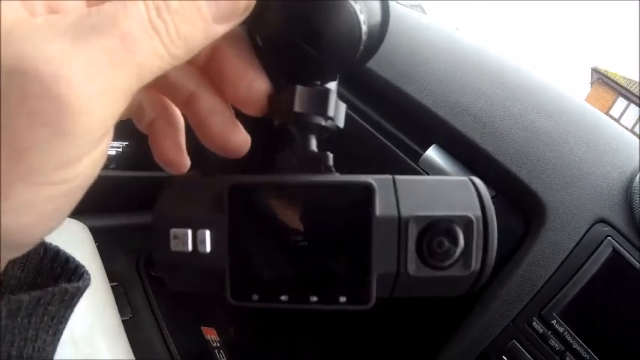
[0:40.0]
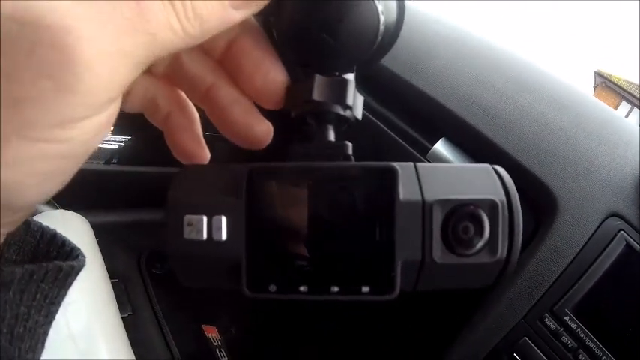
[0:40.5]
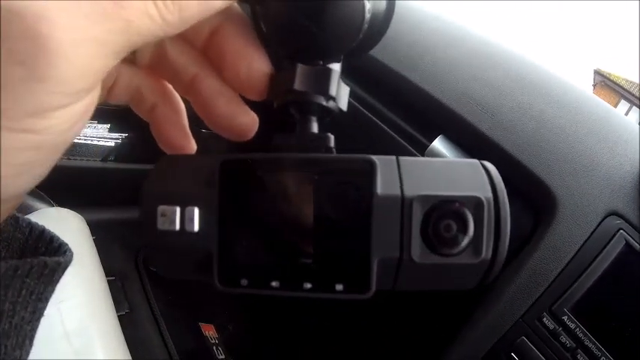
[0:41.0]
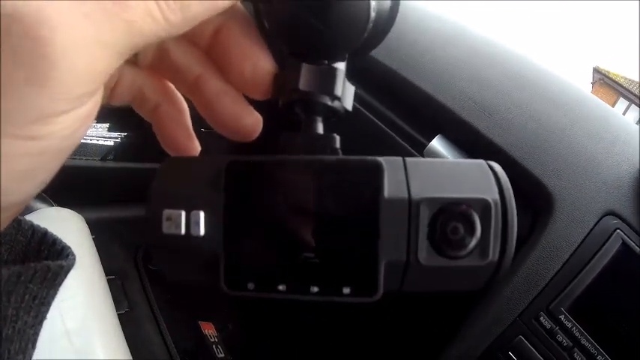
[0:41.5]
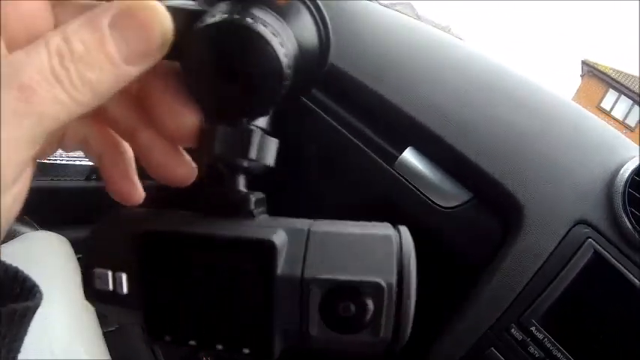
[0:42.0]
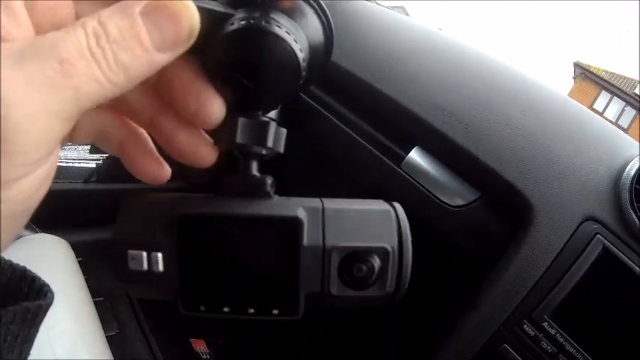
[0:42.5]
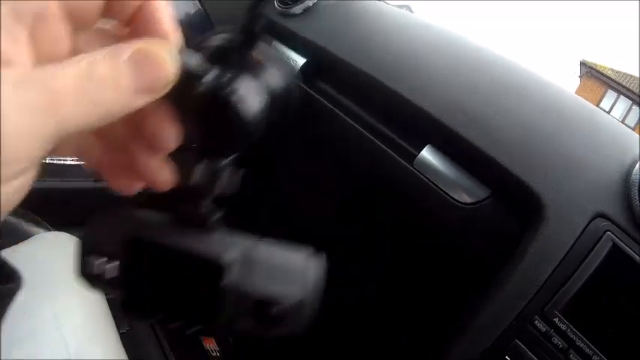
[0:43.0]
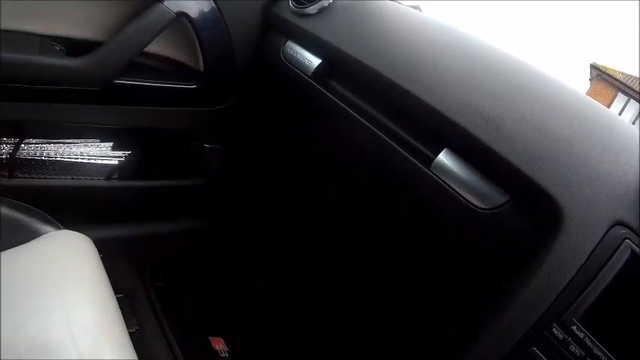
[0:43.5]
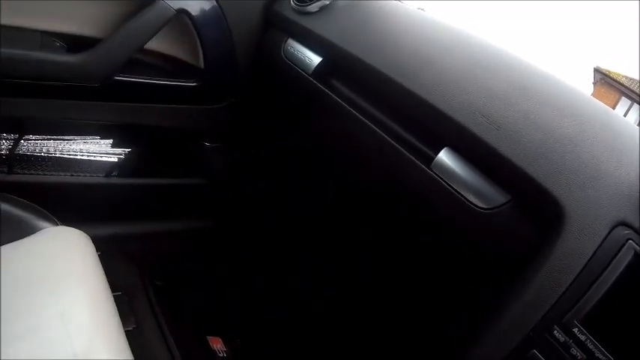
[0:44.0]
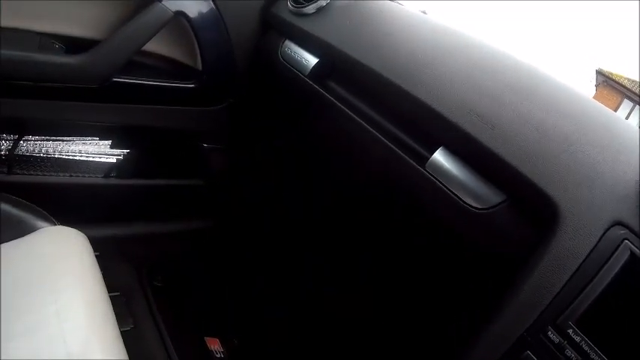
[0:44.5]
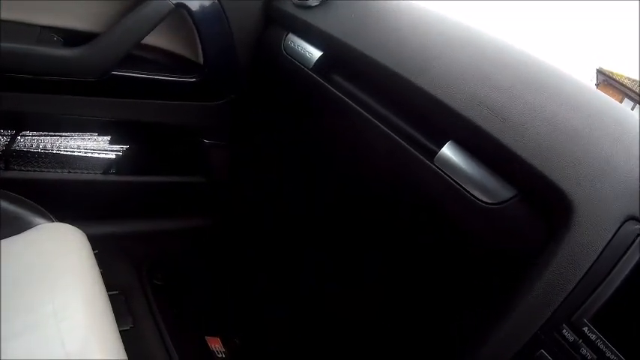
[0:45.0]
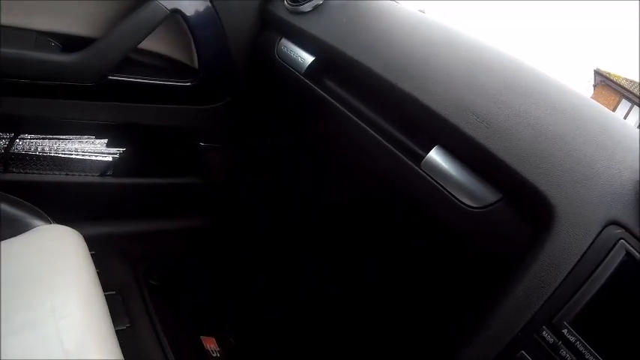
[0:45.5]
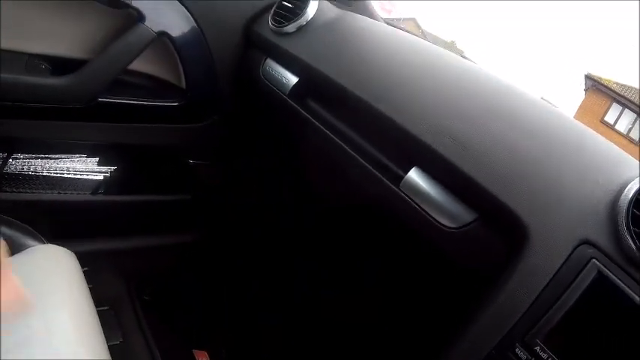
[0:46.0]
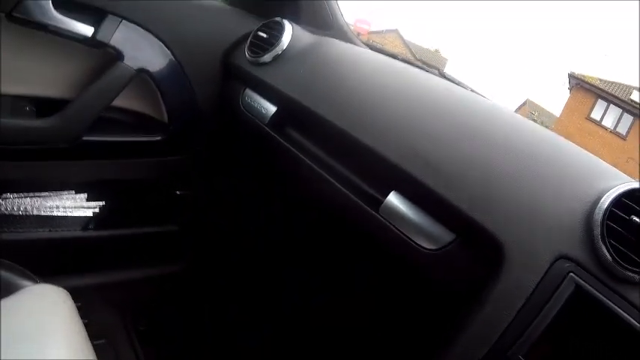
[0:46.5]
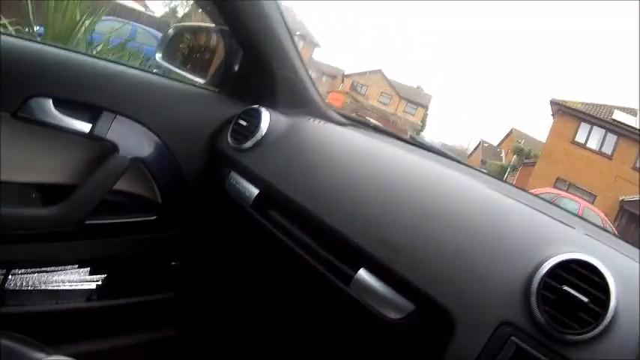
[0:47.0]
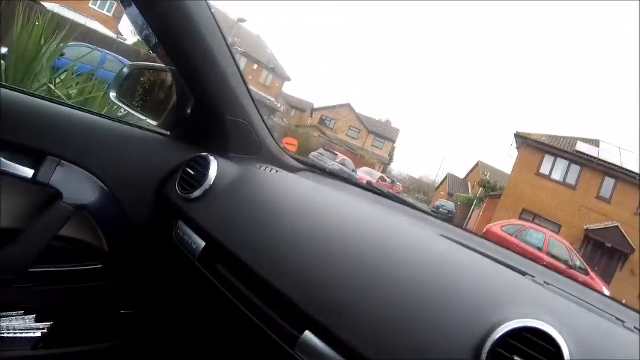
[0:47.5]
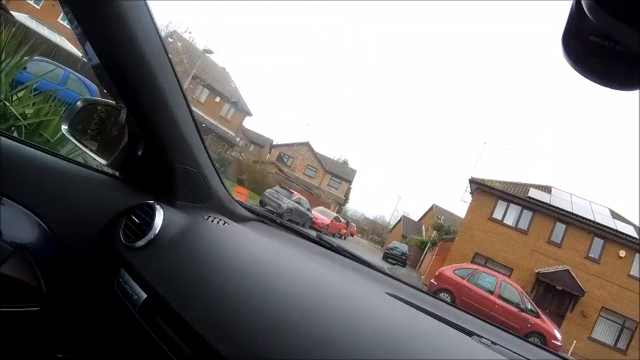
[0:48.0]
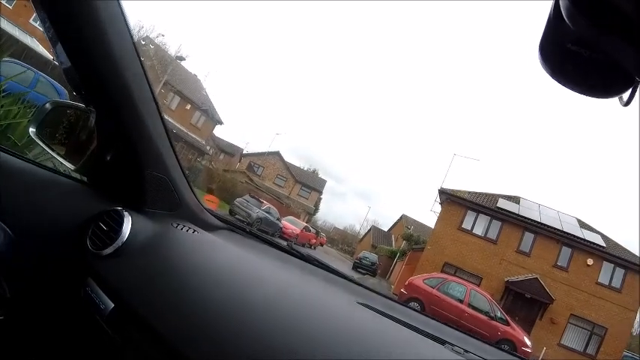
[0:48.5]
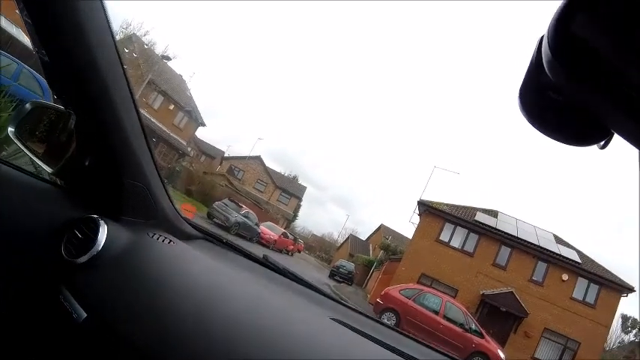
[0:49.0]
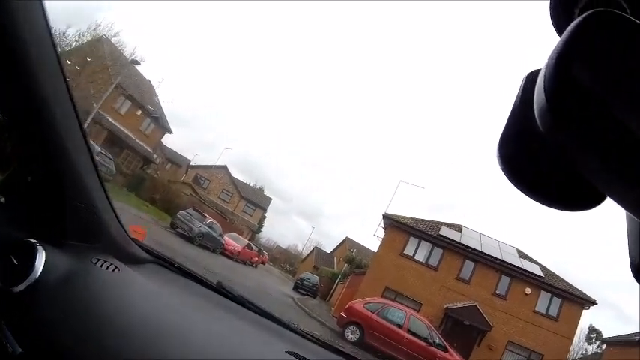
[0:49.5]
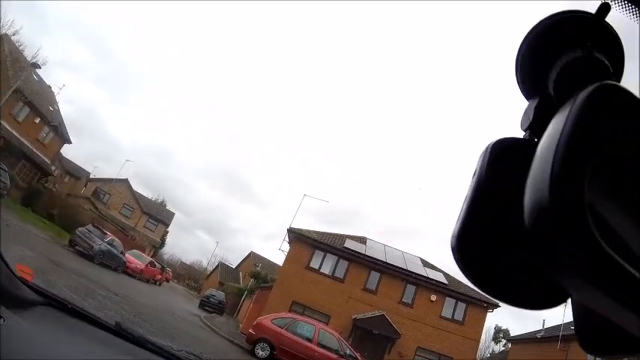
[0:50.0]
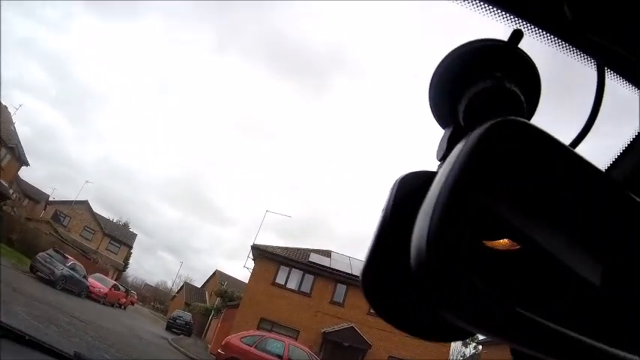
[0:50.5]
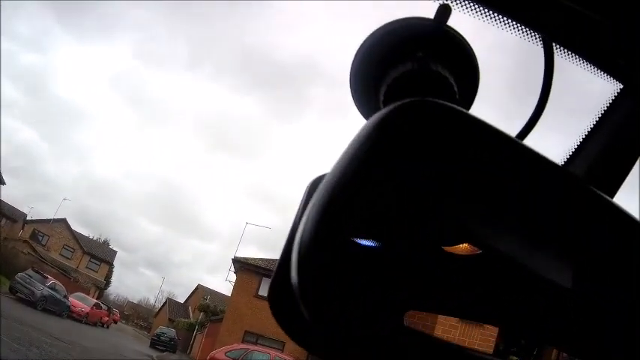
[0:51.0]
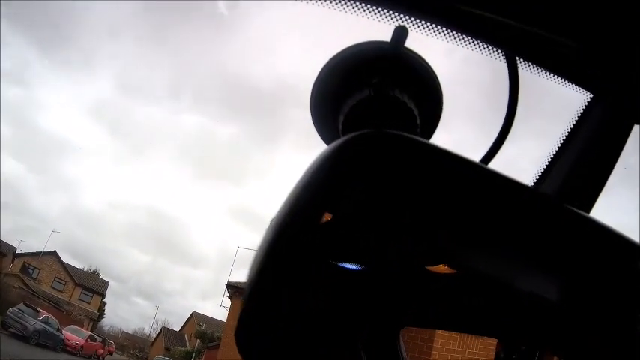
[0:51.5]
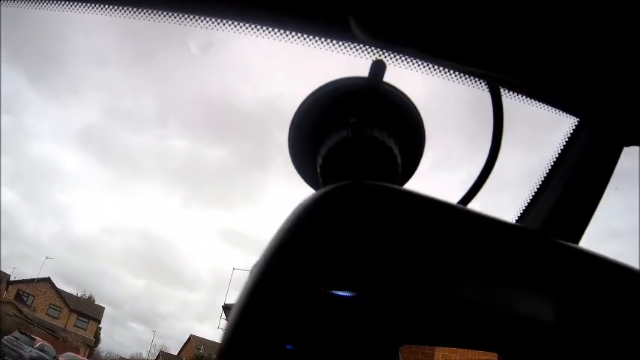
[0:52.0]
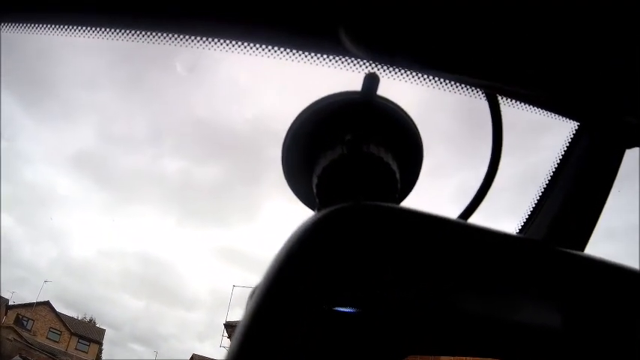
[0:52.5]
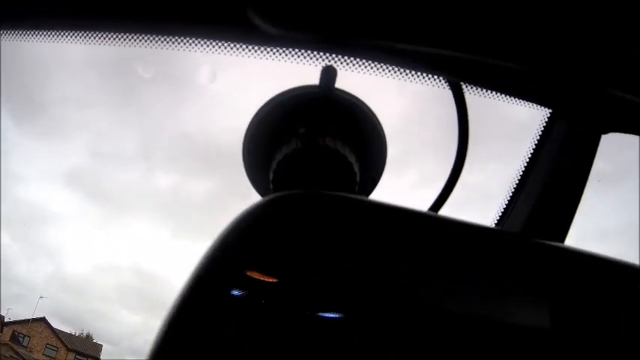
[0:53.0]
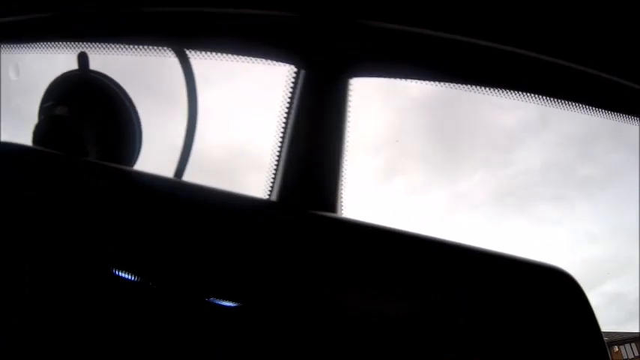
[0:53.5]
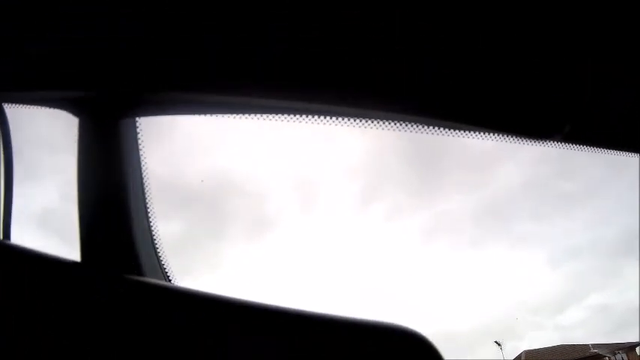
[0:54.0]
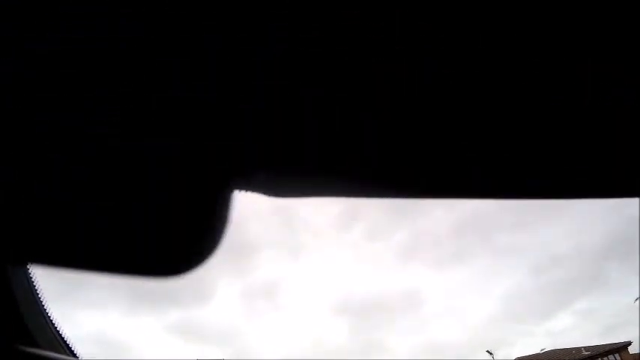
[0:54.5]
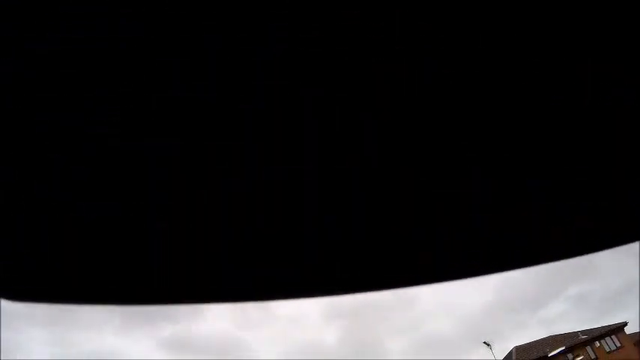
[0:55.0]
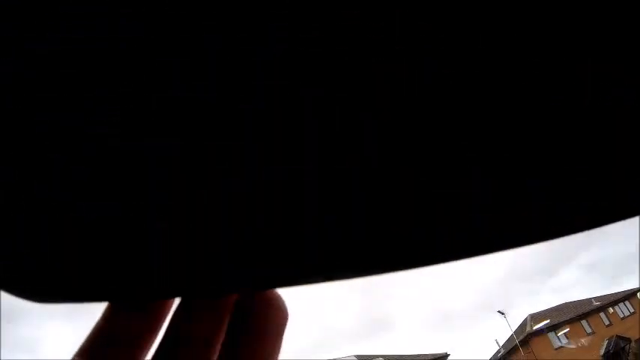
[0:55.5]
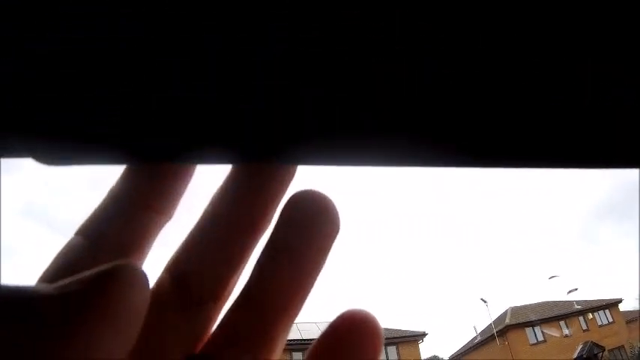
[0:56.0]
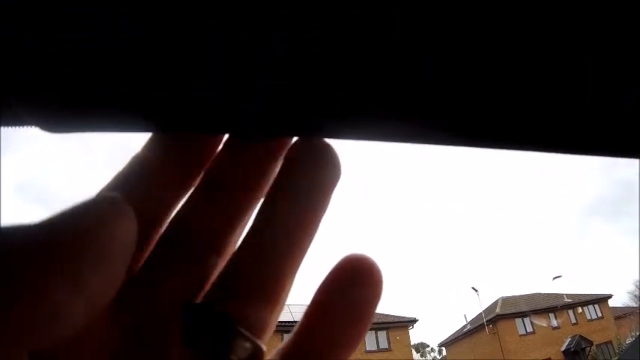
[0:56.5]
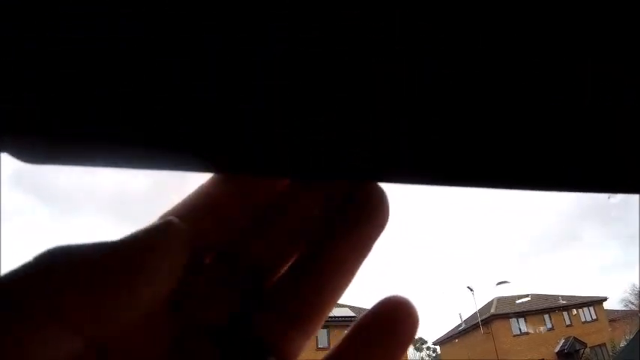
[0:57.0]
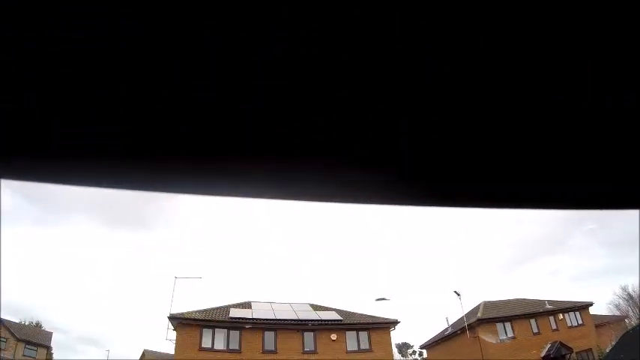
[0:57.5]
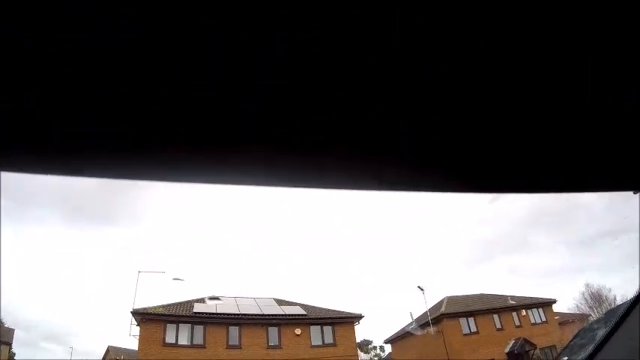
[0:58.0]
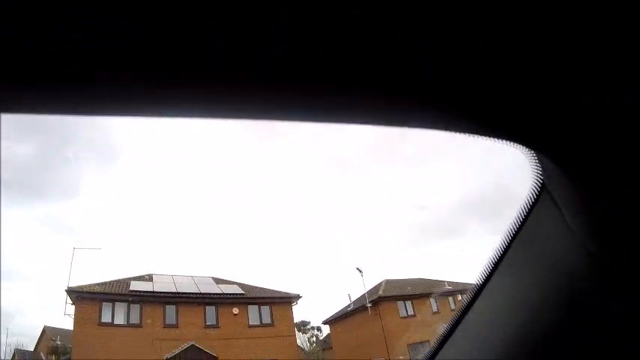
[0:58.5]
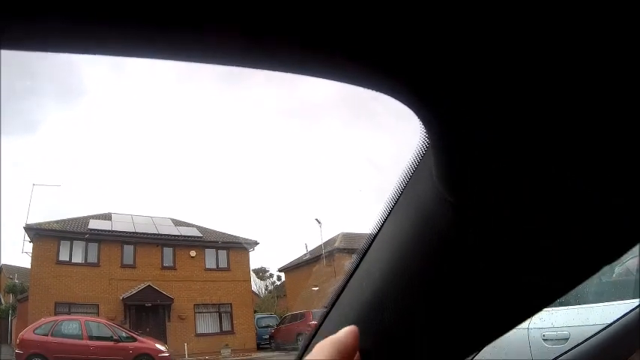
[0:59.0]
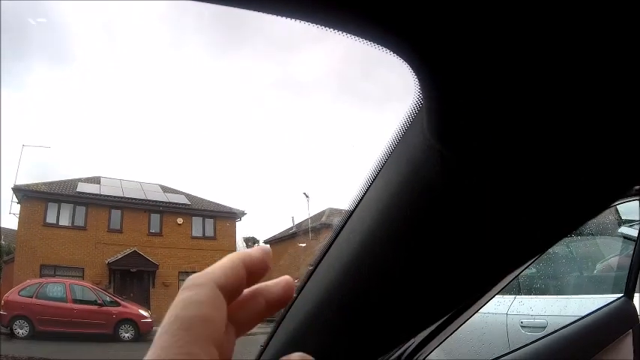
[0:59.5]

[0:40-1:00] Inside a car, the person filming may be wearing a GoPro or another head-mounted camera, judging by the viewpoint. Their left hand holds up a black gadget with a tiny screen in the middle. It looks to be a dash cam, but it is not connected. As they put it down, the dashboard of the car comes into view; the steering wheel is on the right and just the dashboard on the left. The view out the front window shows what looks like a residential area with little greenery, and two-story houses or apartment buildings that look kind of run down. The camera pans up to the rearview mirror, then appears to pan up to the interior roof of the car where it meets the window, and he taps on it.